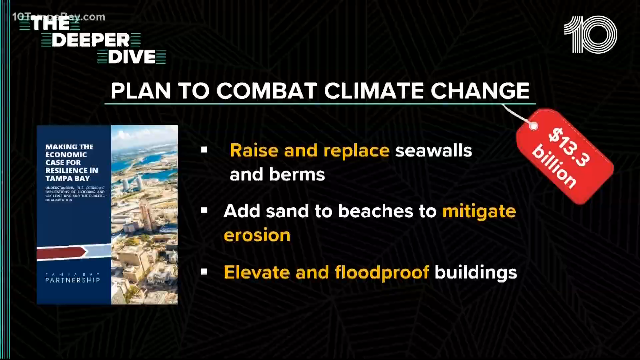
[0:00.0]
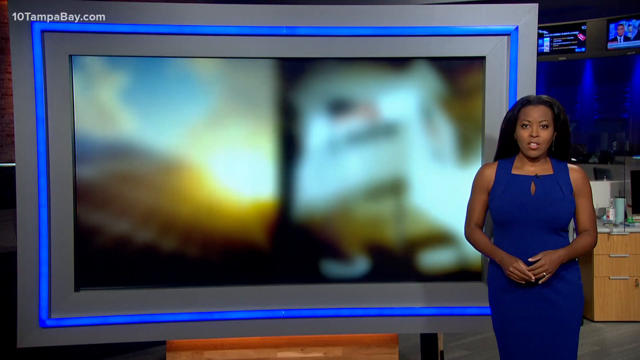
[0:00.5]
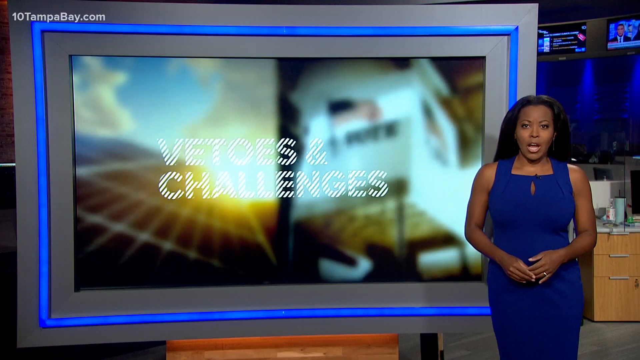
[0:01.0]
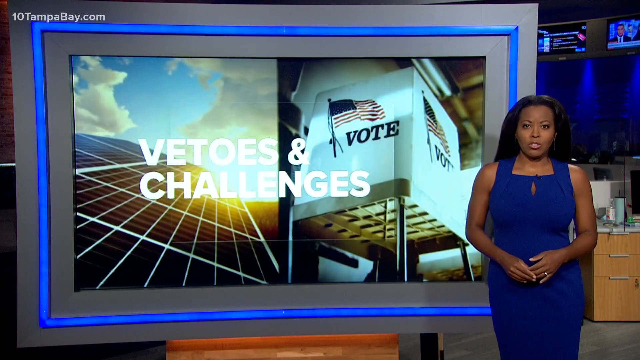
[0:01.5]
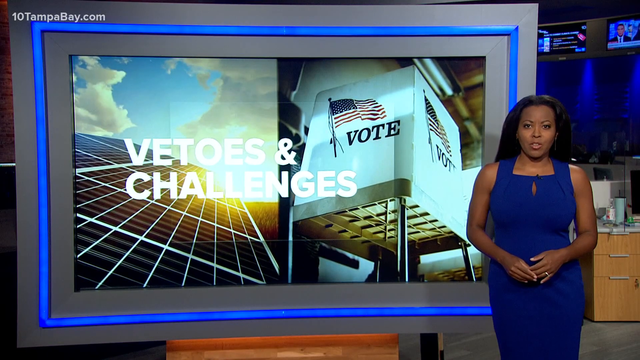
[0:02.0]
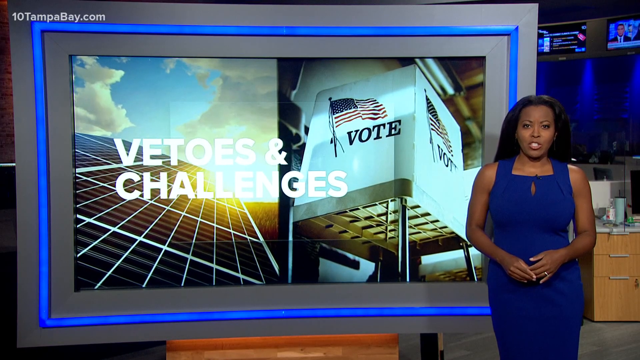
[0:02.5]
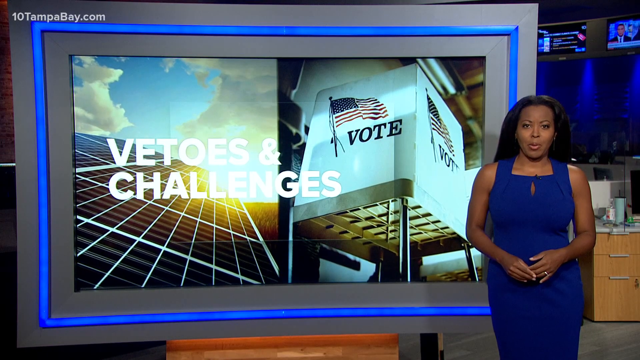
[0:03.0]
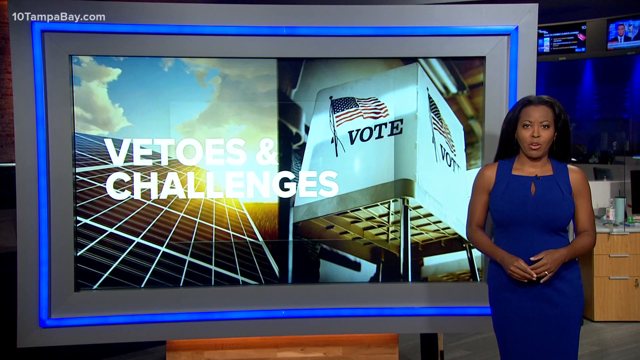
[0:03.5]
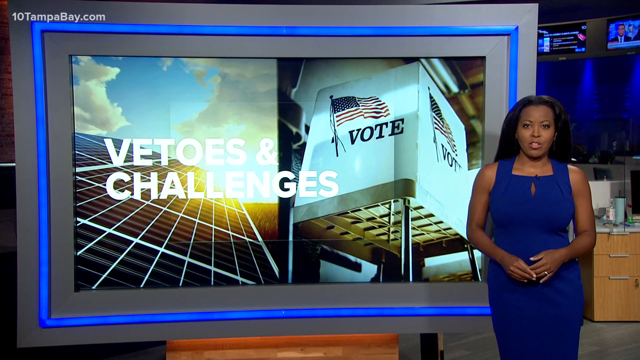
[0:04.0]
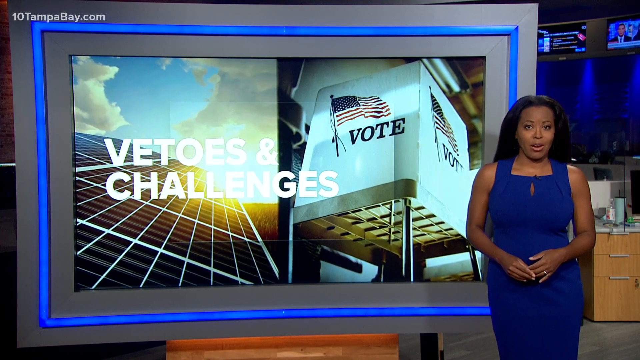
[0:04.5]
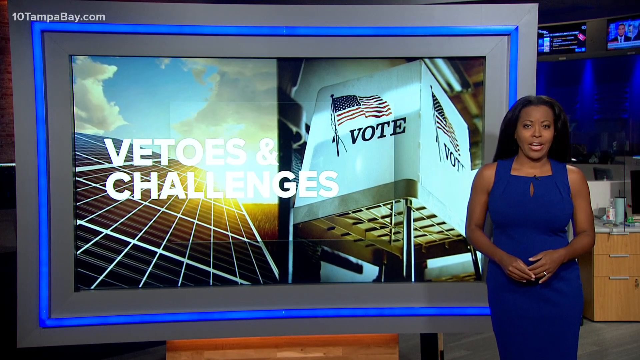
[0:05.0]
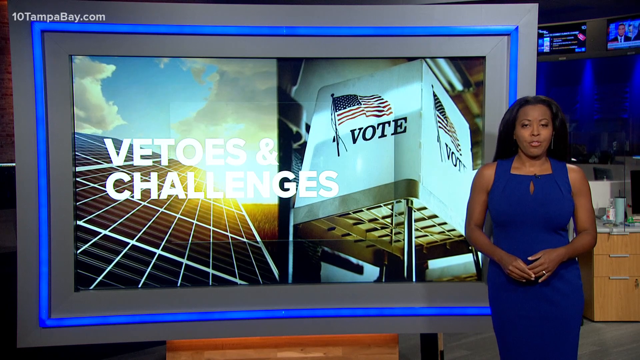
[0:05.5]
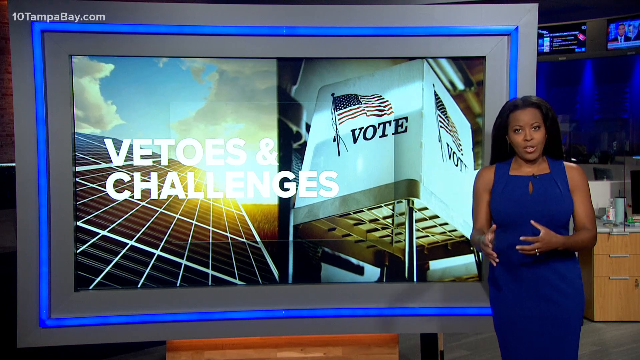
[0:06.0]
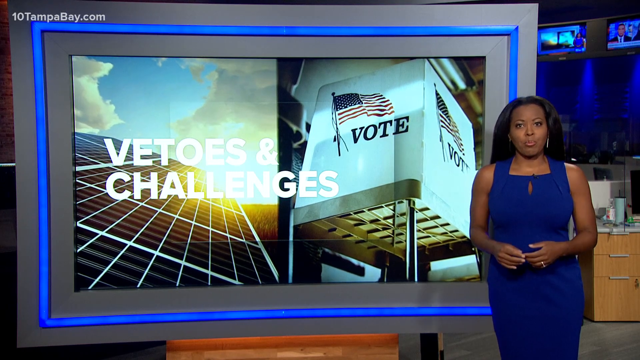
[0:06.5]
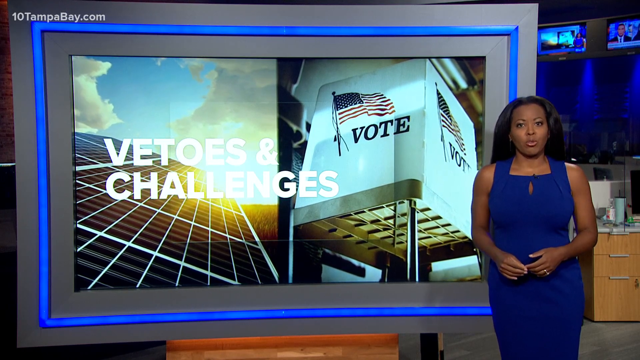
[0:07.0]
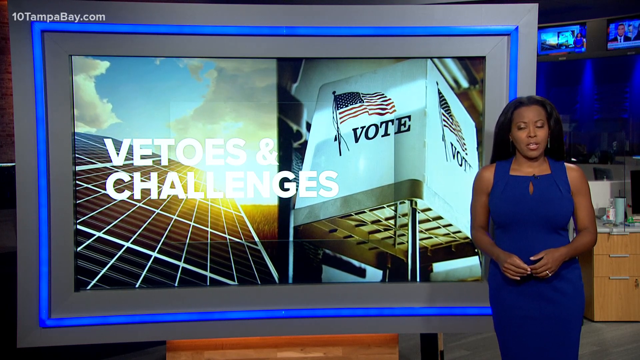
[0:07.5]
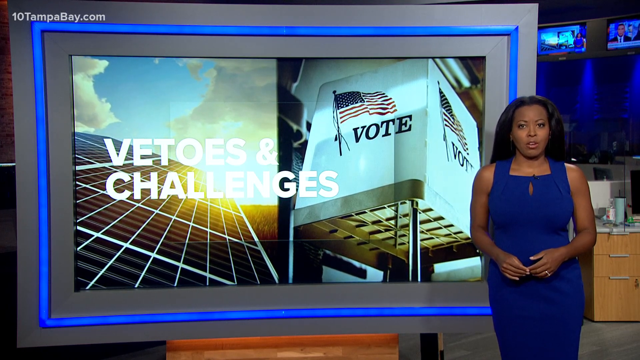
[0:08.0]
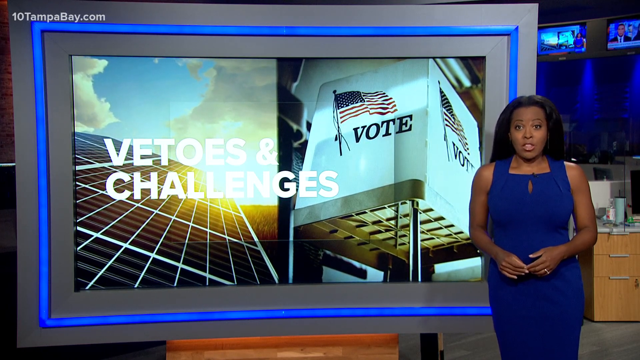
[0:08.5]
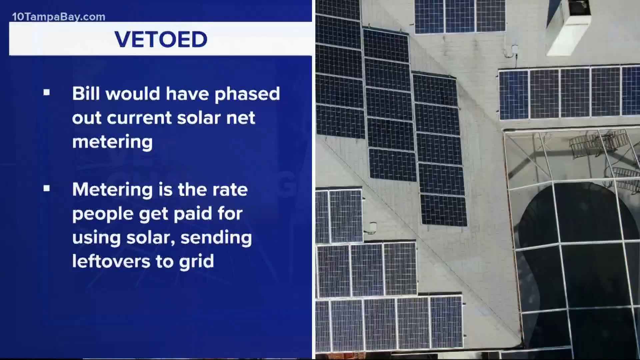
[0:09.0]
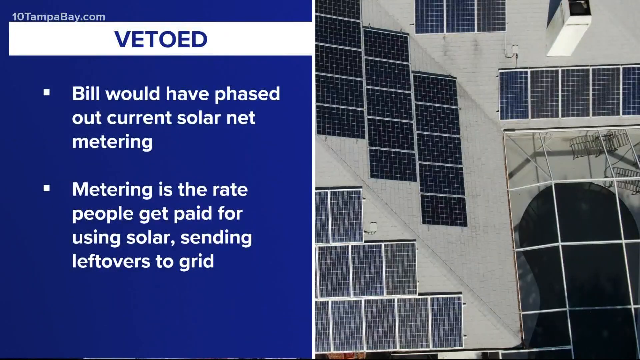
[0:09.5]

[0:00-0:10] A news reporter stands beside a large screen display in a news studio. She wears a dark blue sleeveless dress with a square neckline, and the blue of her dress matches the blue decorative frame around the screen. On the screen, the words "VETOES & CHALLENGES" appear in white text, along with a white voting booth bearing the American flag and the word "VOTE". The reporter speaks and gestures with her hands as she talks, staring straight ahead at the camera.